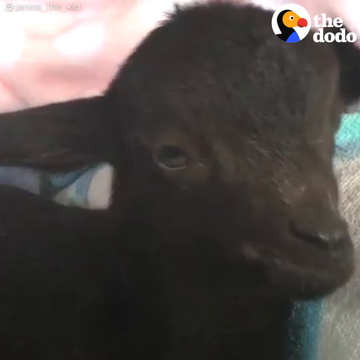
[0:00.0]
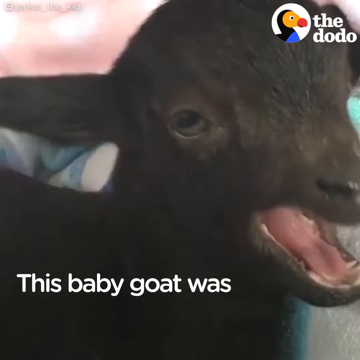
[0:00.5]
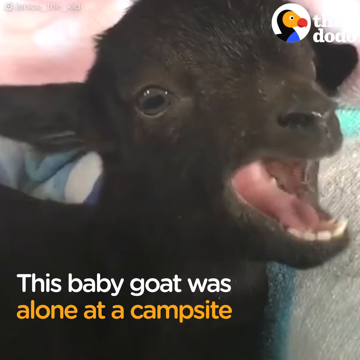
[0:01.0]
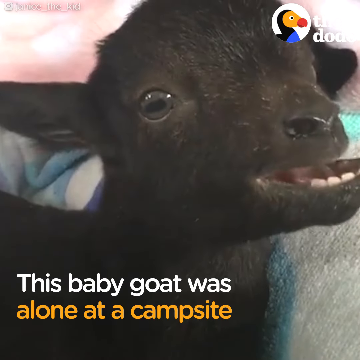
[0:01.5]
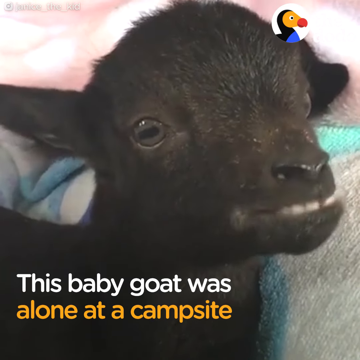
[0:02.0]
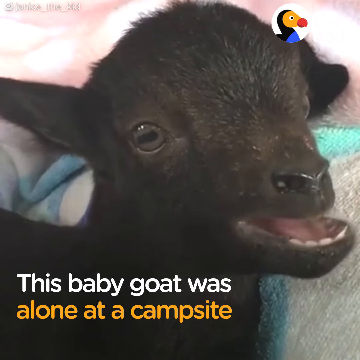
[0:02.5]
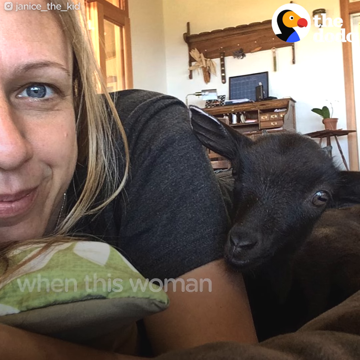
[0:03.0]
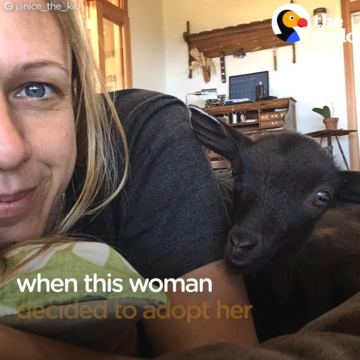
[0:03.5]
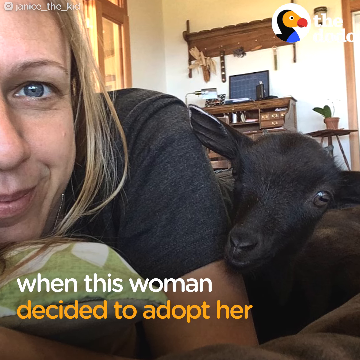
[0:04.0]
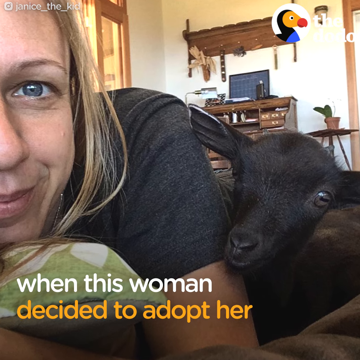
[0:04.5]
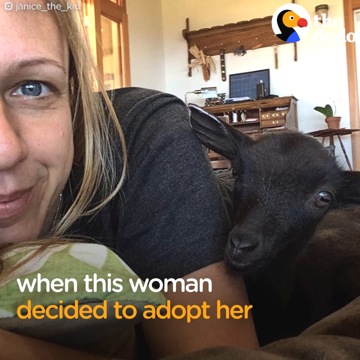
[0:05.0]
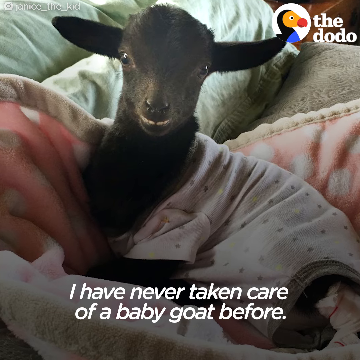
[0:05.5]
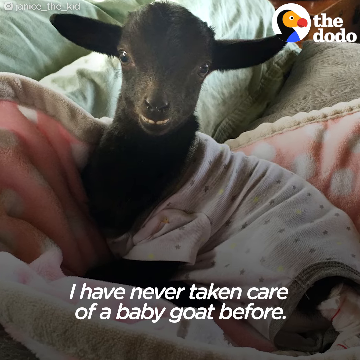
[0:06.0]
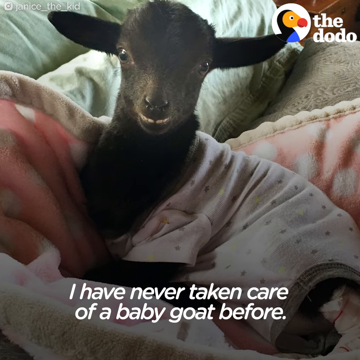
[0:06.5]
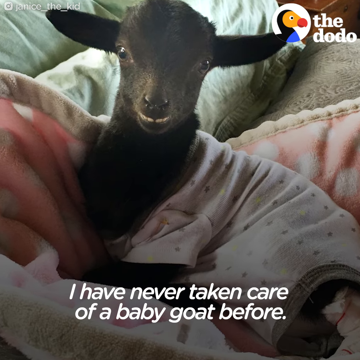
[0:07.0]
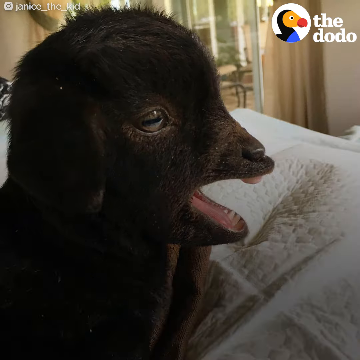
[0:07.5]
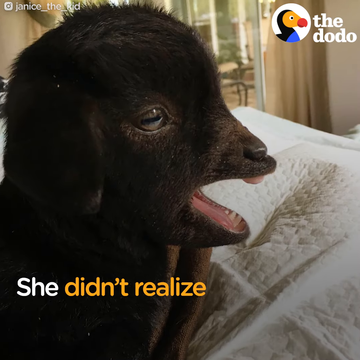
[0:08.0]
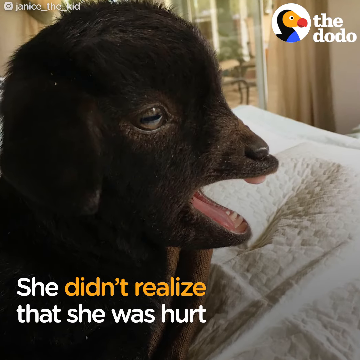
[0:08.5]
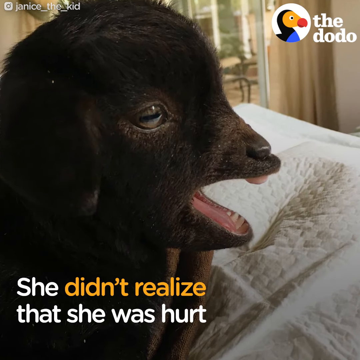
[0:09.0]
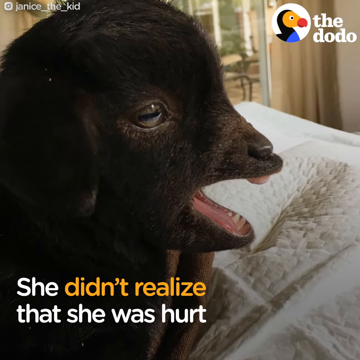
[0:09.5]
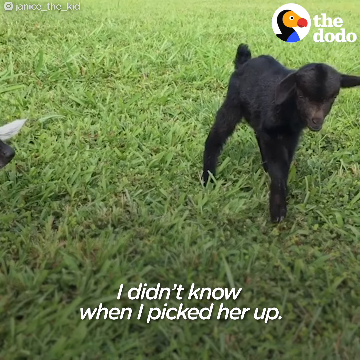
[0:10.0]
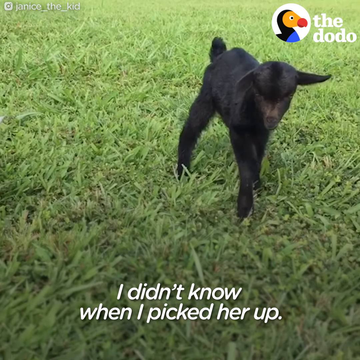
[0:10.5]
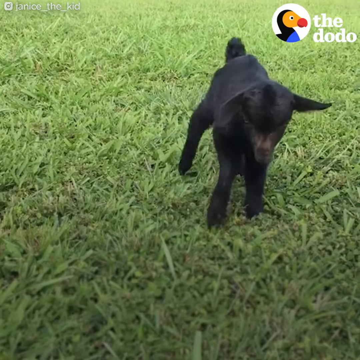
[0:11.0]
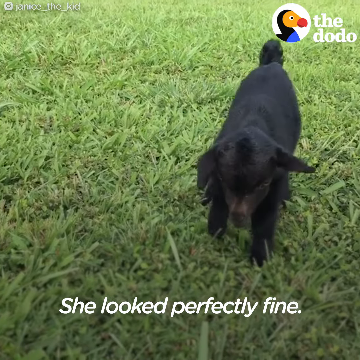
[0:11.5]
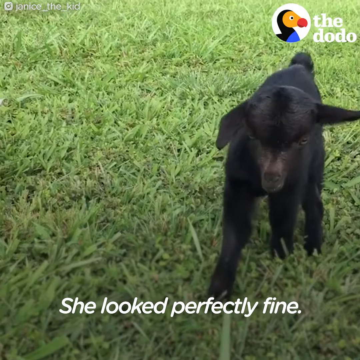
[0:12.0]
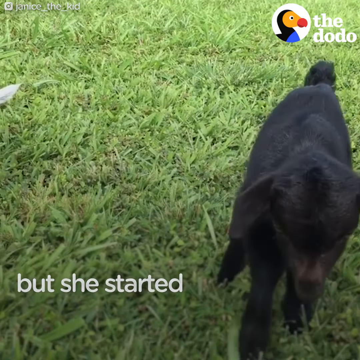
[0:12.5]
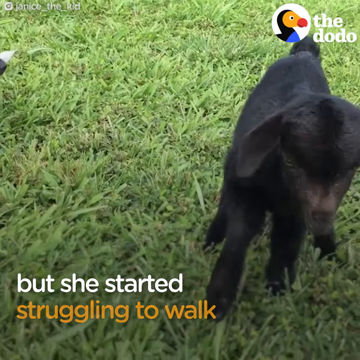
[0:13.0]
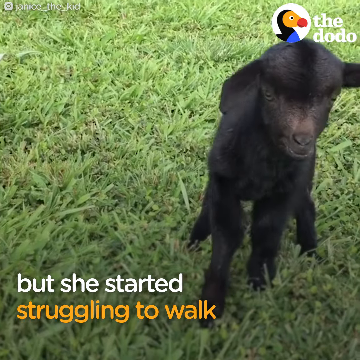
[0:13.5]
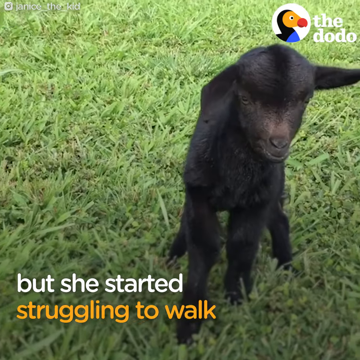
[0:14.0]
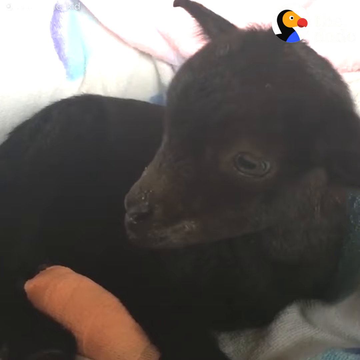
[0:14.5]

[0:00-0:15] Inside someone's house, a little black goat with a hurt paw has been rescued by a lady. She is seen walking the little goat, and he is getting comfortable in her house. The goat has a cat friend that is also black; the cat lies down next to the goat, making friends. The little goat wears a little sweater and has a little blue bandage on his hurt paw. The lady holds him like a baby. He goes from being sad to running around, now with pink bandages on his feet.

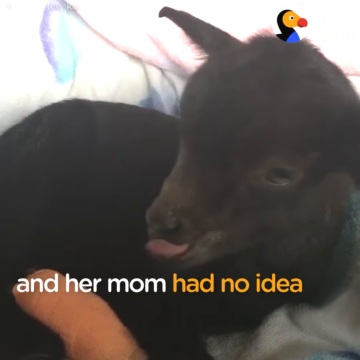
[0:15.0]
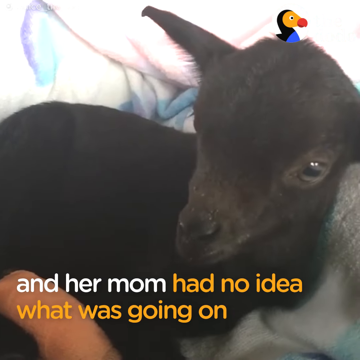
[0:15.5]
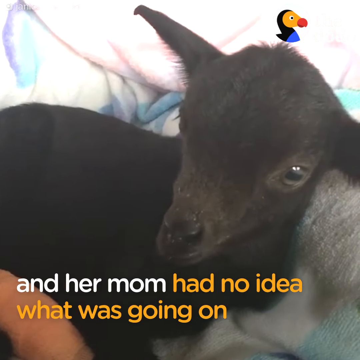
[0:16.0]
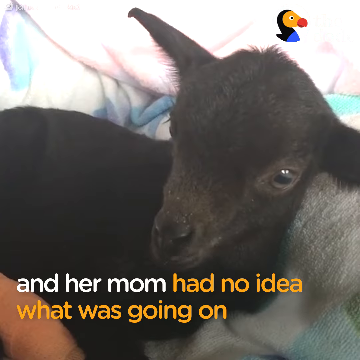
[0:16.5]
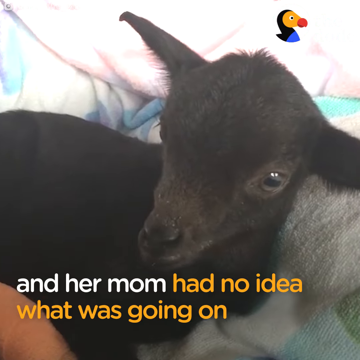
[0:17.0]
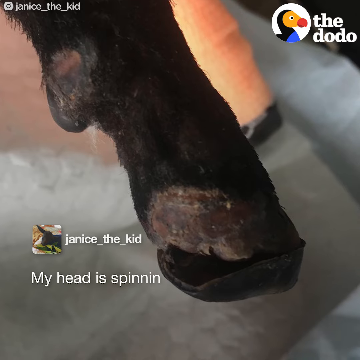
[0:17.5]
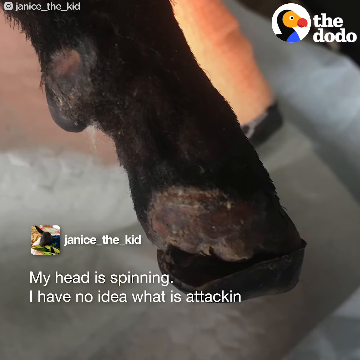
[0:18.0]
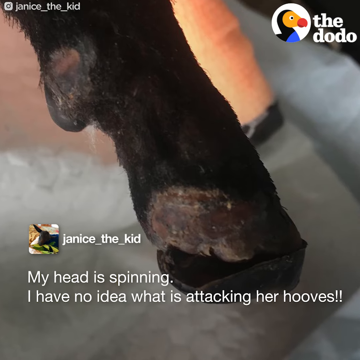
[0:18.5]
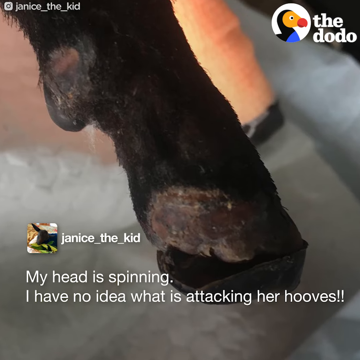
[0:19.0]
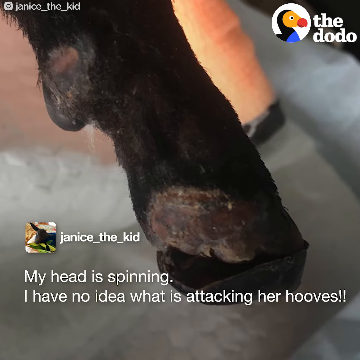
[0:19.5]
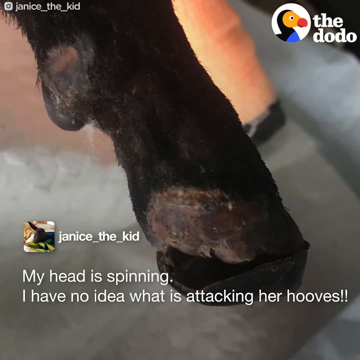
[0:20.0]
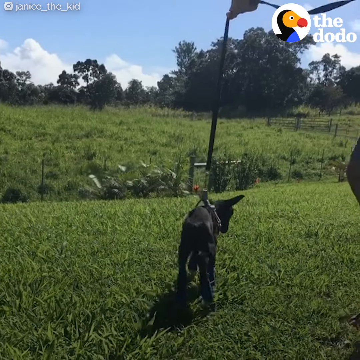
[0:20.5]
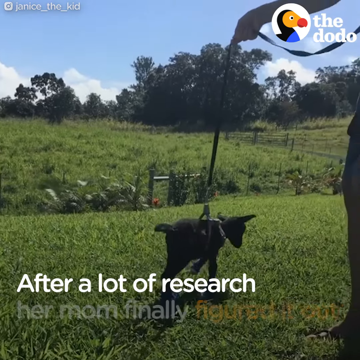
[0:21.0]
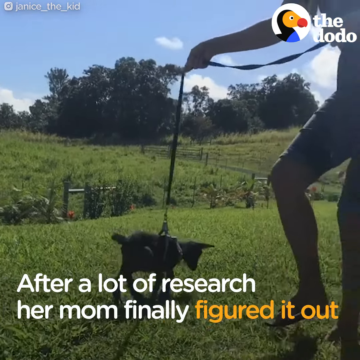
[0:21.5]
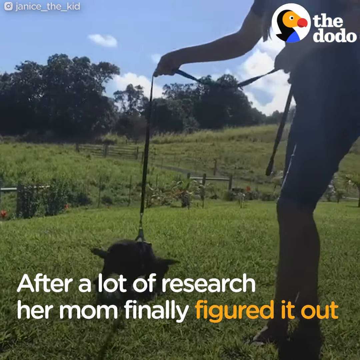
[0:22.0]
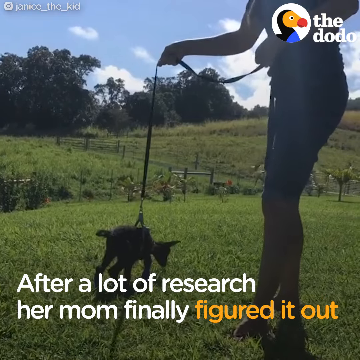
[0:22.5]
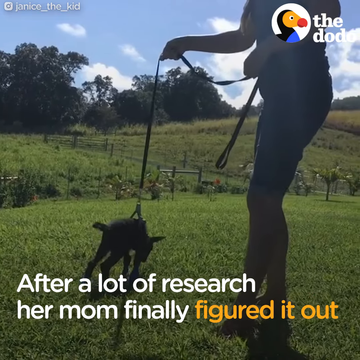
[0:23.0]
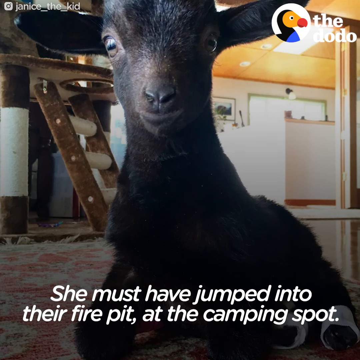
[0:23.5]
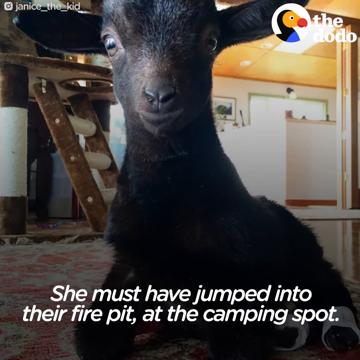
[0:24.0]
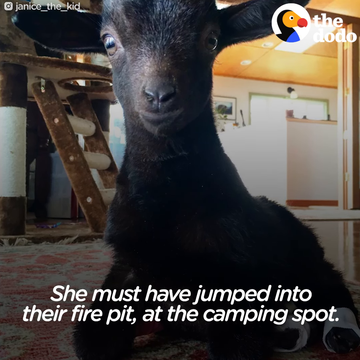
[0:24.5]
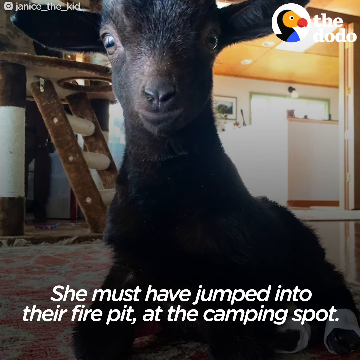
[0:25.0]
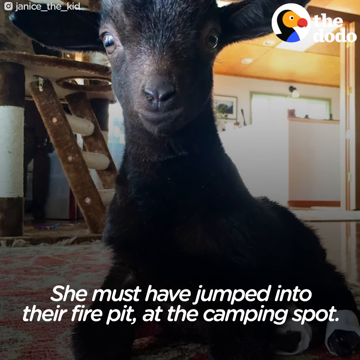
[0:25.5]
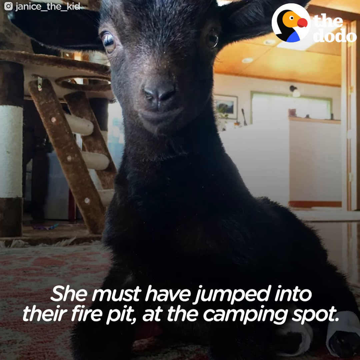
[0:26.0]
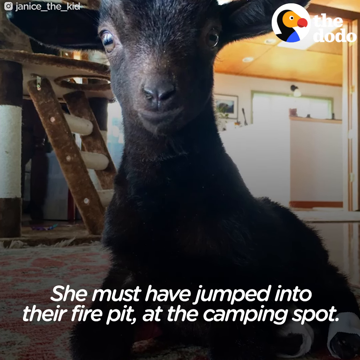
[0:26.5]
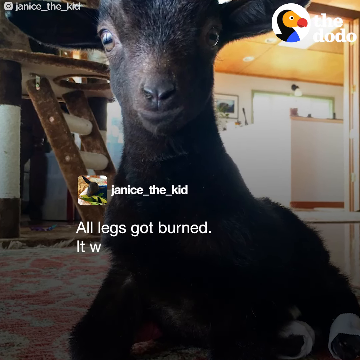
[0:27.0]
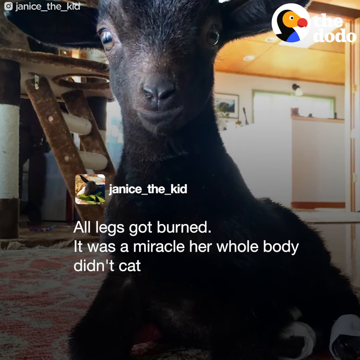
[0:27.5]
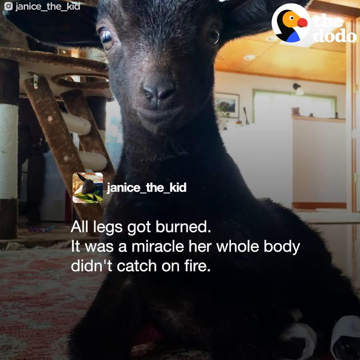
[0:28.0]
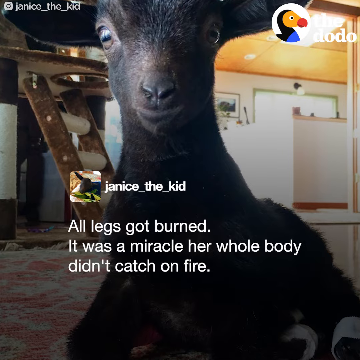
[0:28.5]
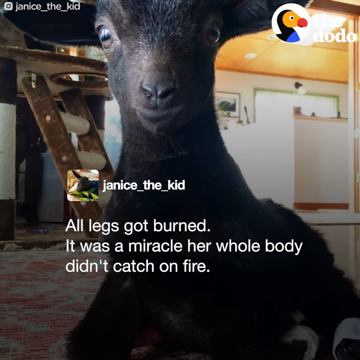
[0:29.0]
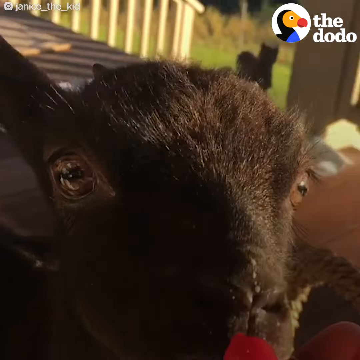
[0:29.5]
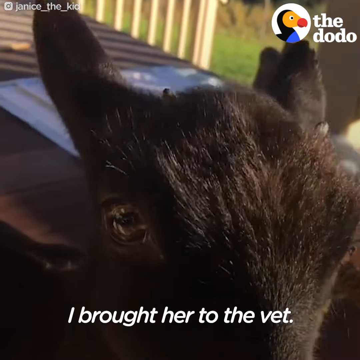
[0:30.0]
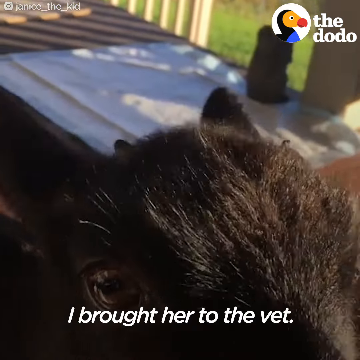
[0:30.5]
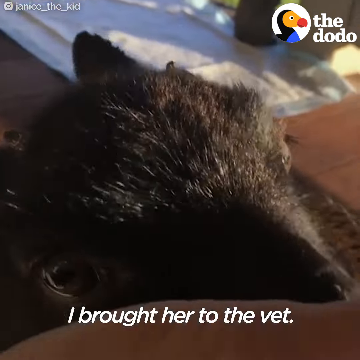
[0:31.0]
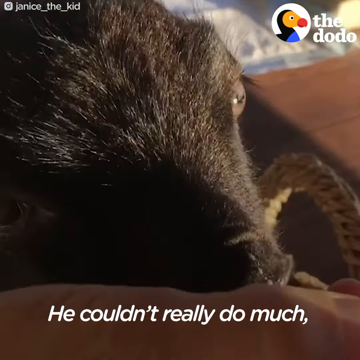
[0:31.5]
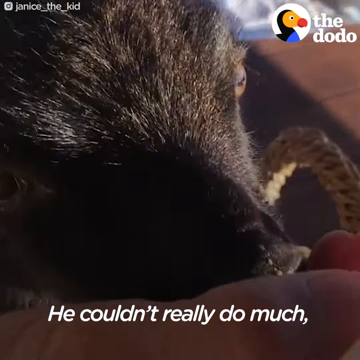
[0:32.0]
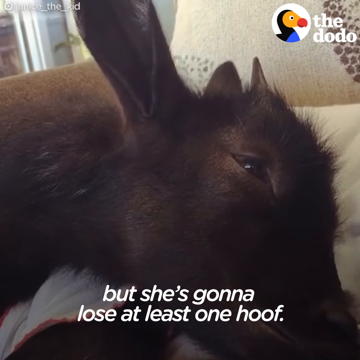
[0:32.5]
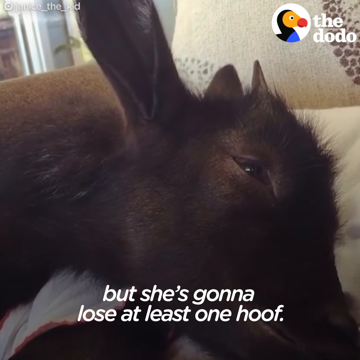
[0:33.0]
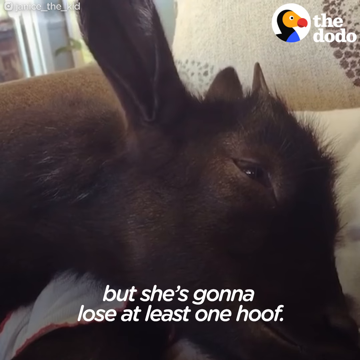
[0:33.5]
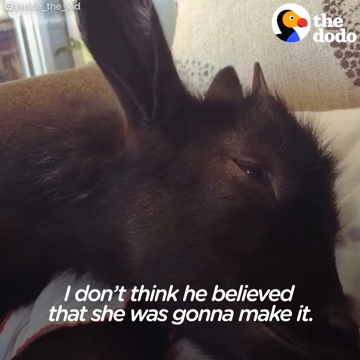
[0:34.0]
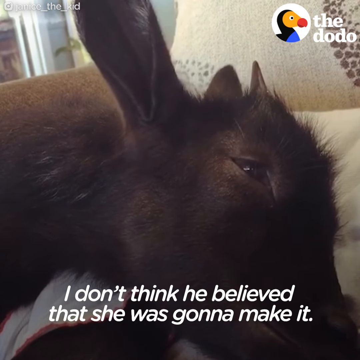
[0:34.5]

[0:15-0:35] The little goat walks around outside and looks out at the cameraman. He has black fur. He lies down sleeping, and his hurt paw is shown; his leg was burned. Printed text says that he had somehow burnt his foot. He was left in a park, and the lady apparently took him home. The lady walks him outside in the grass, giving him exercise. He eats from her hands and then sleeps. His paw looks really burnt, almost crispy.